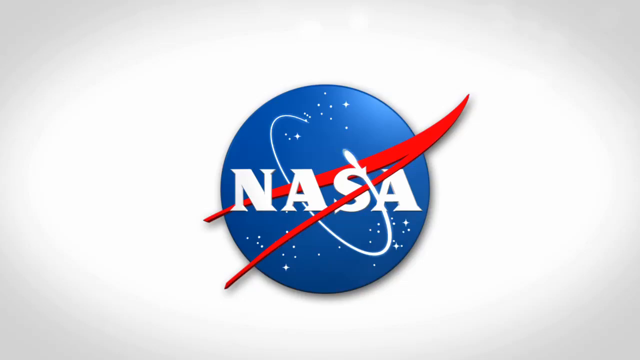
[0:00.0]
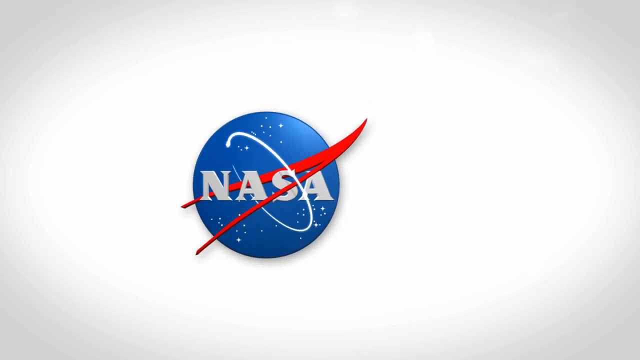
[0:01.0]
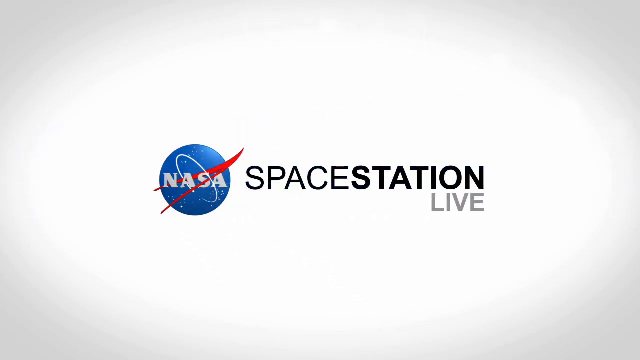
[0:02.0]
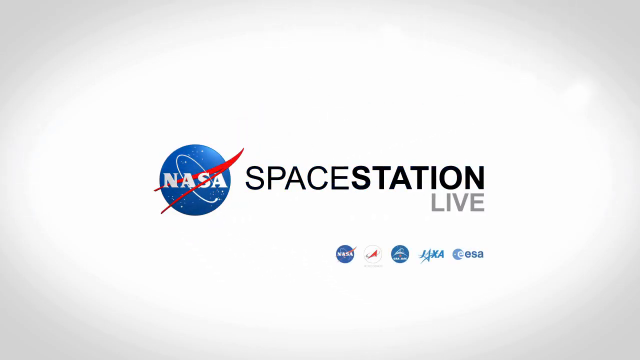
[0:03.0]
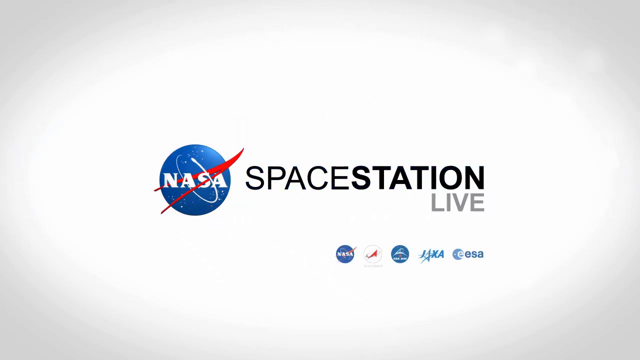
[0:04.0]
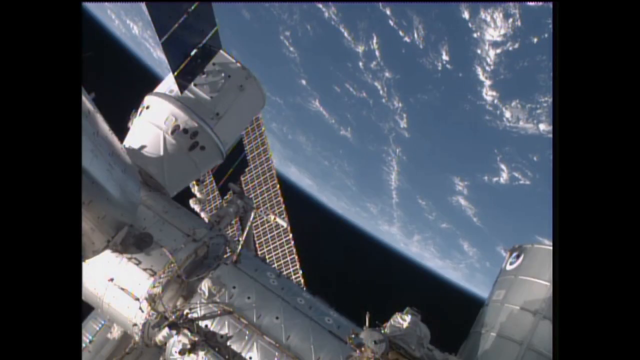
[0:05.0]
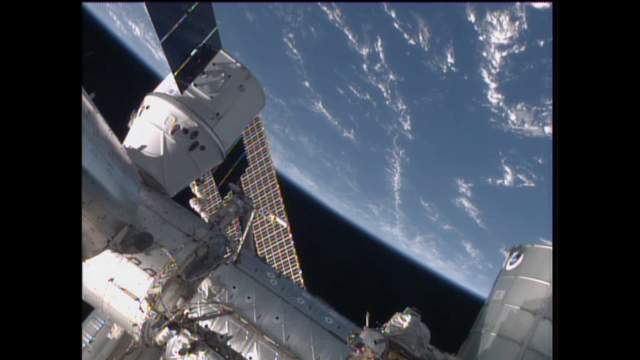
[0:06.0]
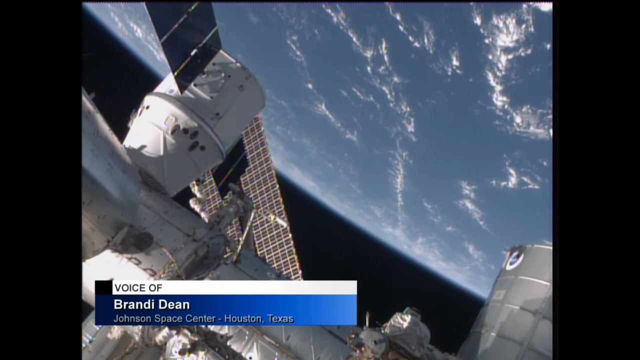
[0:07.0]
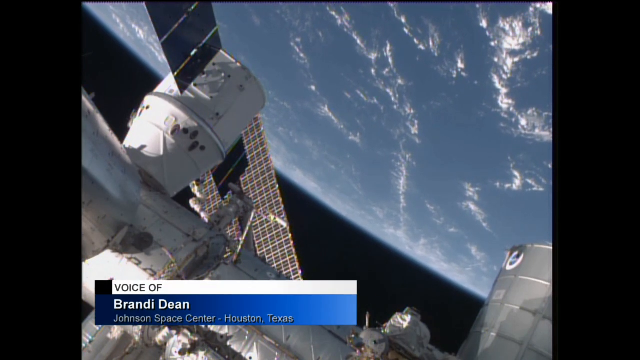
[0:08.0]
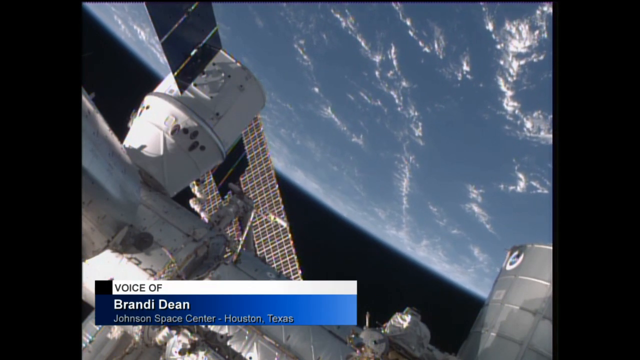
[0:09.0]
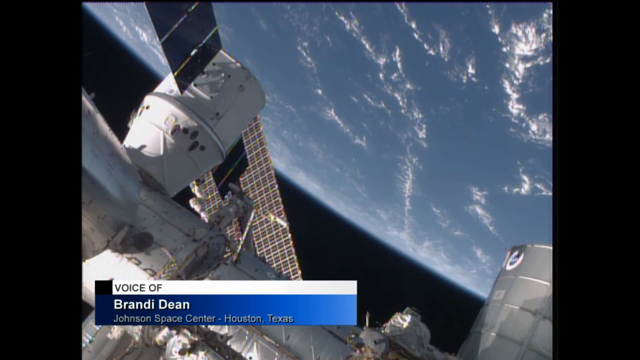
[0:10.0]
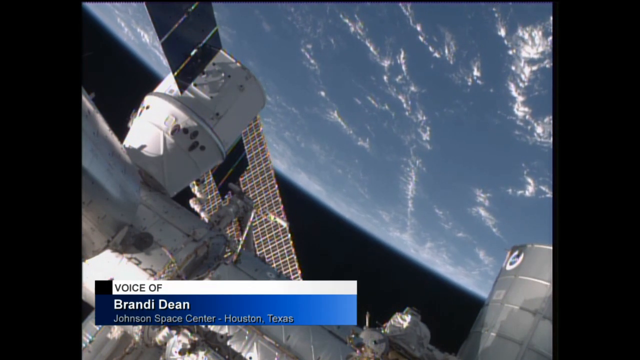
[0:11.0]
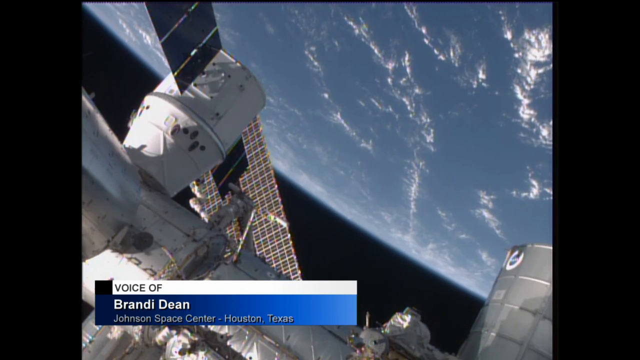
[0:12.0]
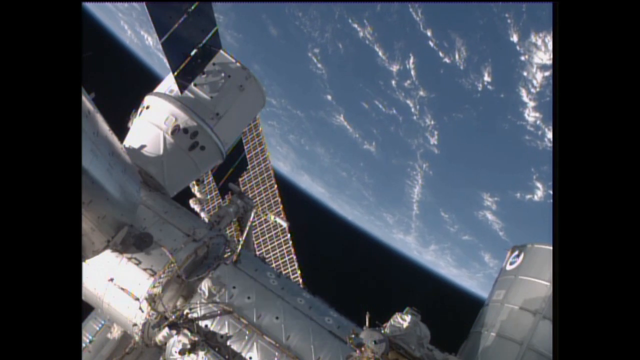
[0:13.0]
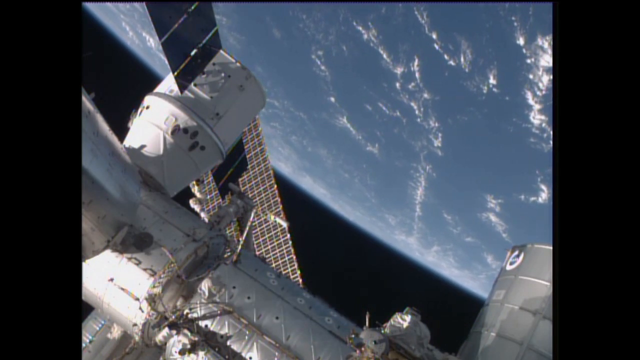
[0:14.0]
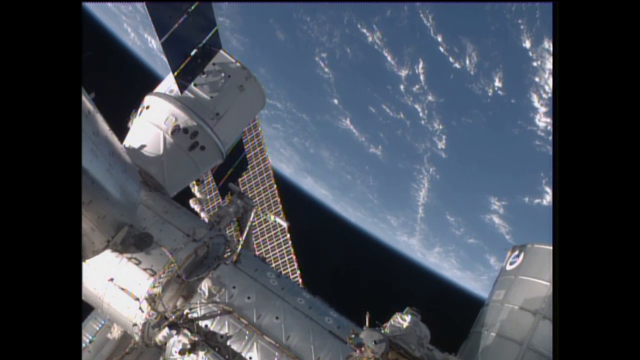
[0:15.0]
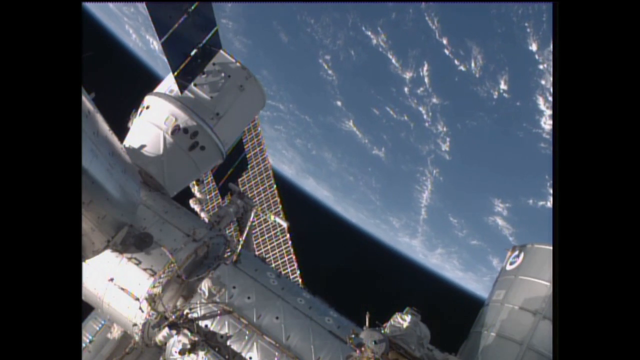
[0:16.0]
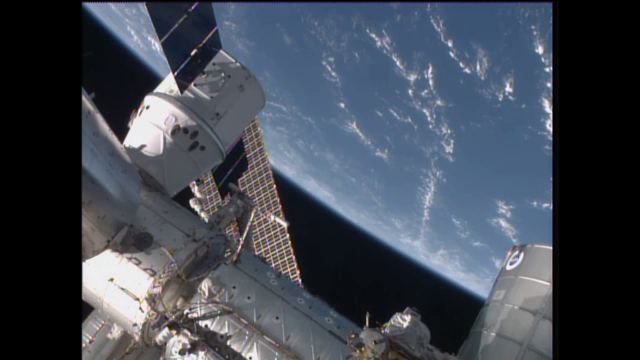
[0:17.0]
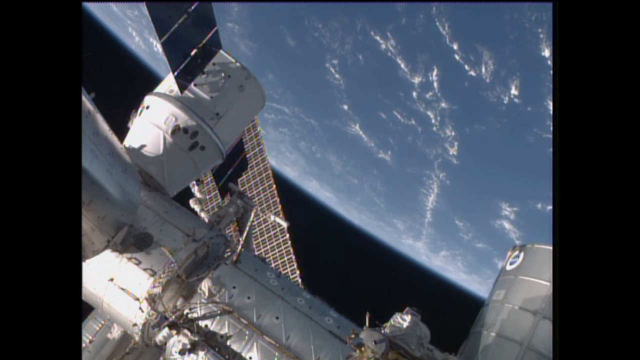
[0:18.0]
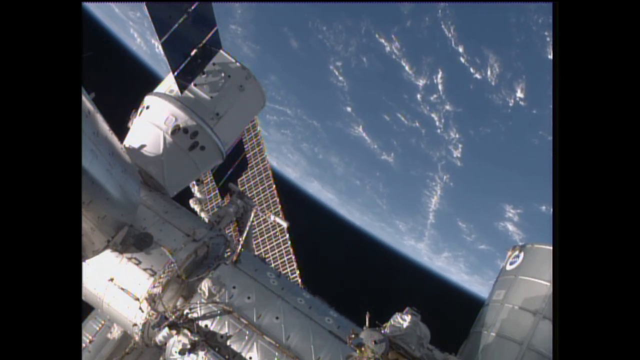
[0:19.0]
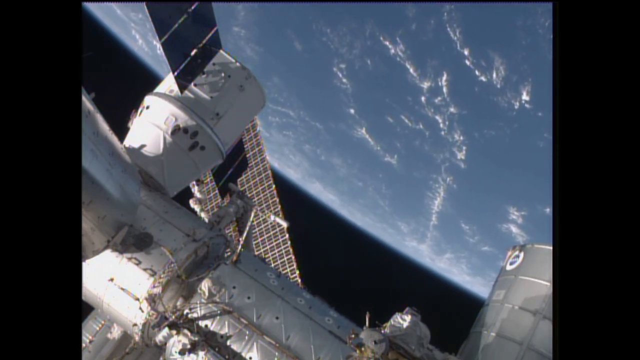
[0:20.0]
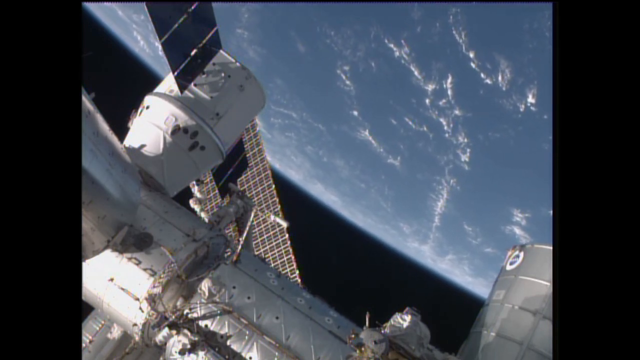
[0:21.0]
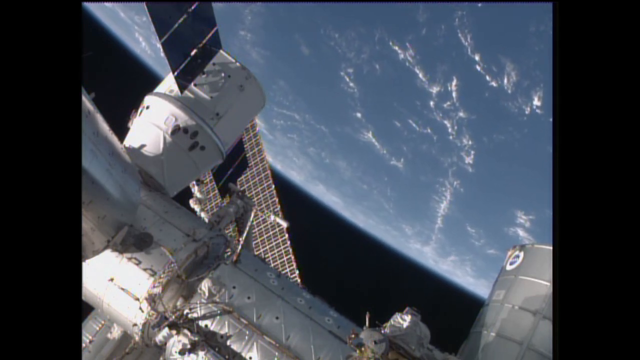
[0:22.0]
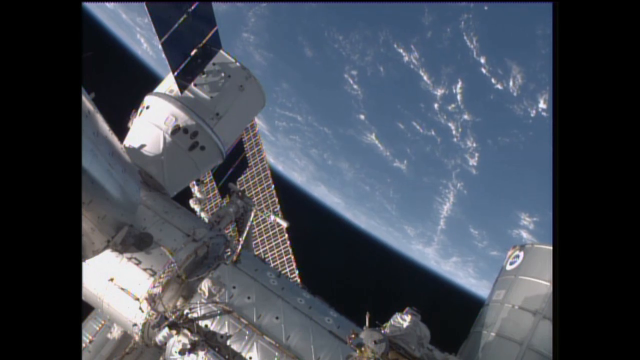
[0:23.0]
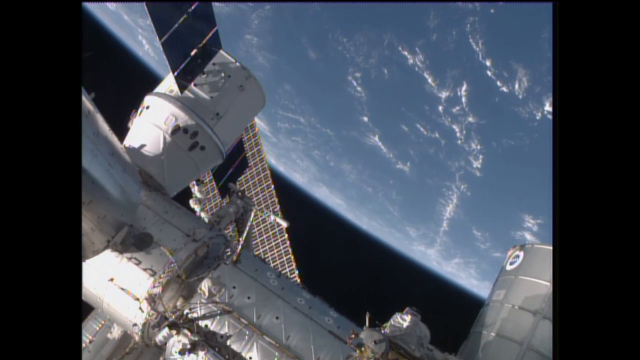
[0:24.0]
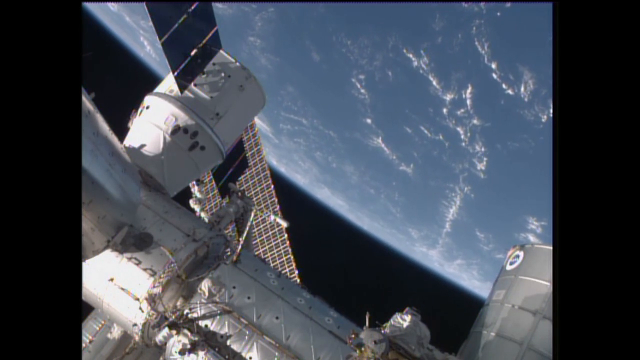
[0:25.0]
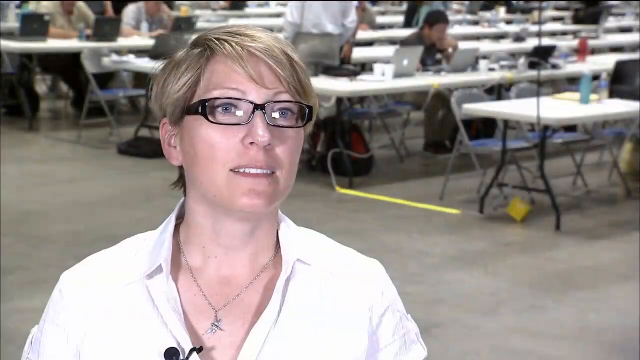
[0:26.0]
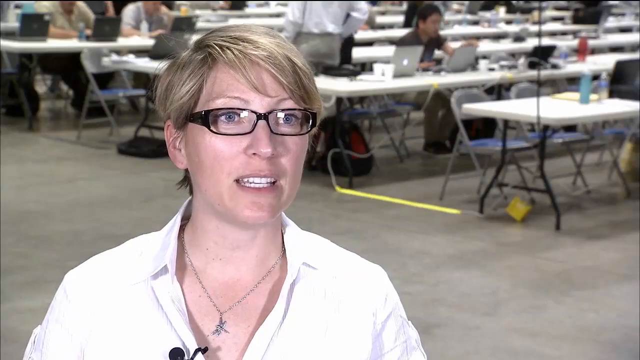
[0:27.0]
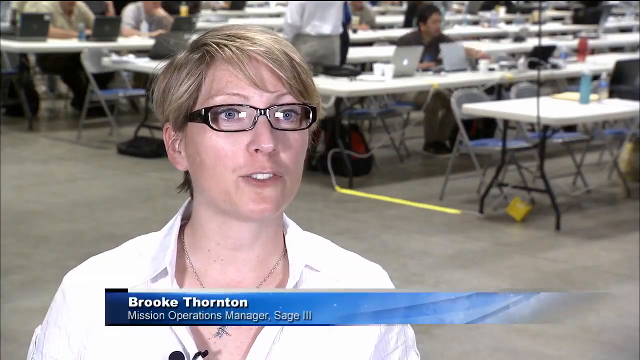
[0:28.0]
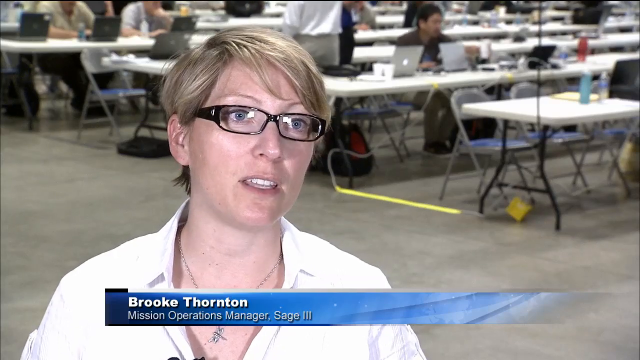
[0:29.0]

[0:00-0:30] A white screen shows a blue circle in the middle with the word "NASA" written in white text inside it. A red line runs behind the word NASA, rising to a point and branching out to form something like a triangle that extends over the top of the word. The symbol then shrinks, and to its right the words "Space Station Live" appear in black. The scene cuts to outer space, where the Earth is barely spinning, and the video is being shot from a satellite. A close-up part of the satellite is visible: black satellite panels connected to a white, round cylinder object attached to the satellite, with the camera on the satellite recording down toward Earth. Along the bottom of the screen, beneath the satellite, a white stripe reads "voice of" in black; underneath it, a blue stripe reads "Brandy Dean" in white, and below that it says "Johnson Space Center, Houston, Texas."